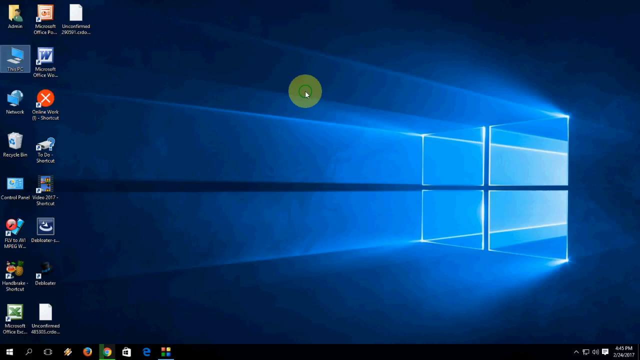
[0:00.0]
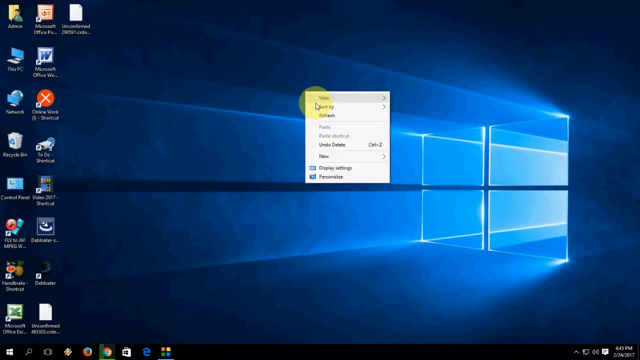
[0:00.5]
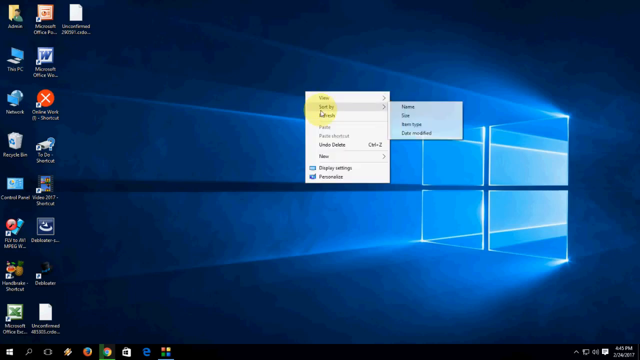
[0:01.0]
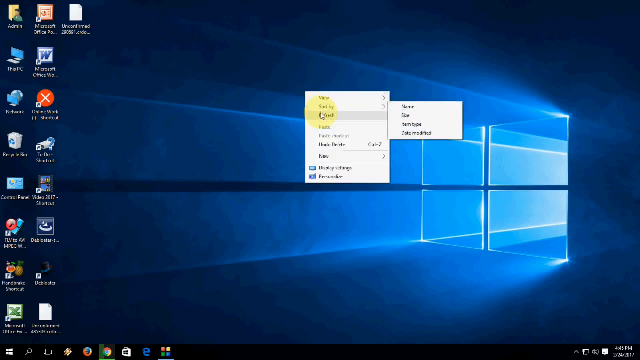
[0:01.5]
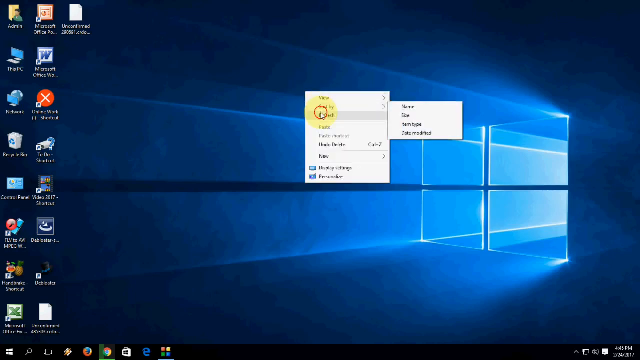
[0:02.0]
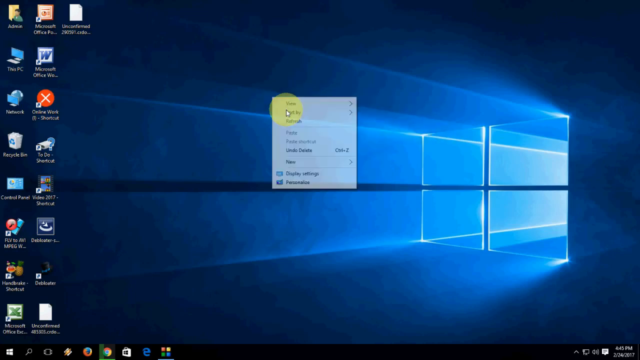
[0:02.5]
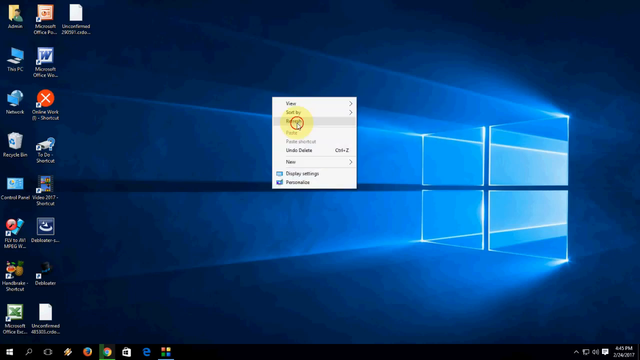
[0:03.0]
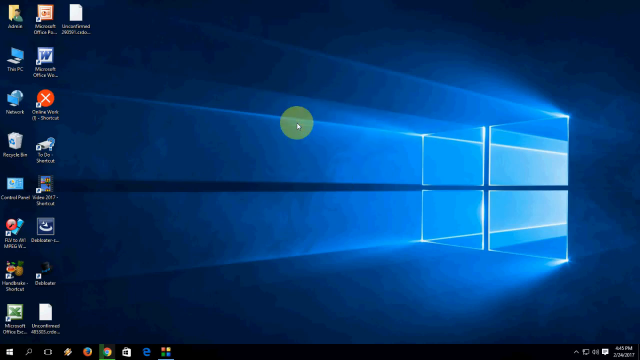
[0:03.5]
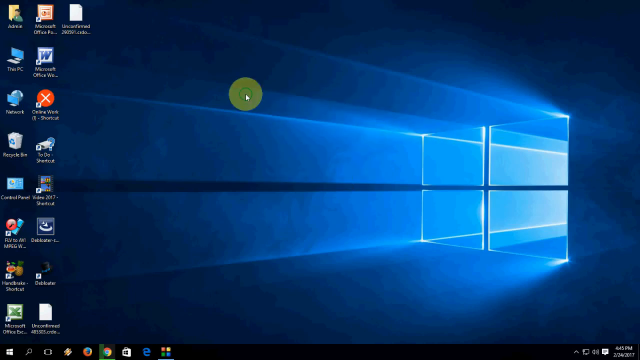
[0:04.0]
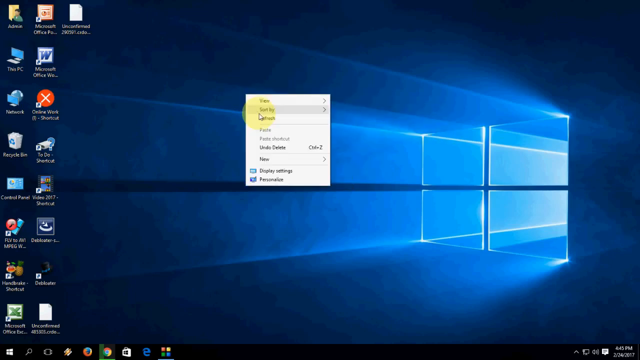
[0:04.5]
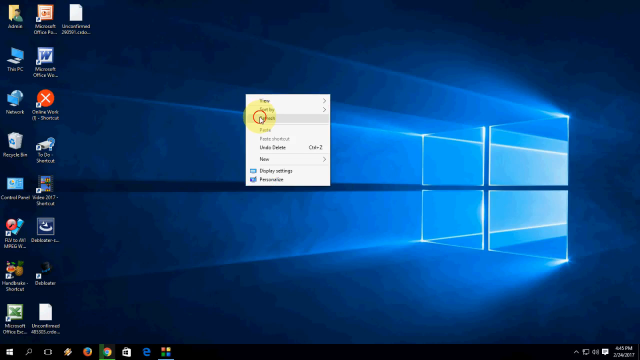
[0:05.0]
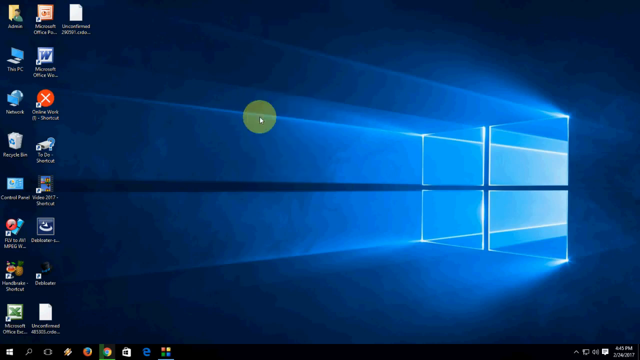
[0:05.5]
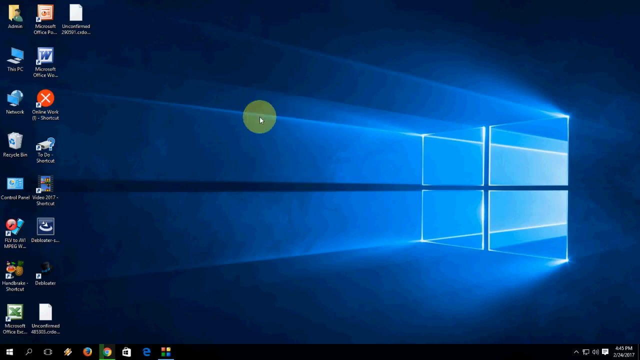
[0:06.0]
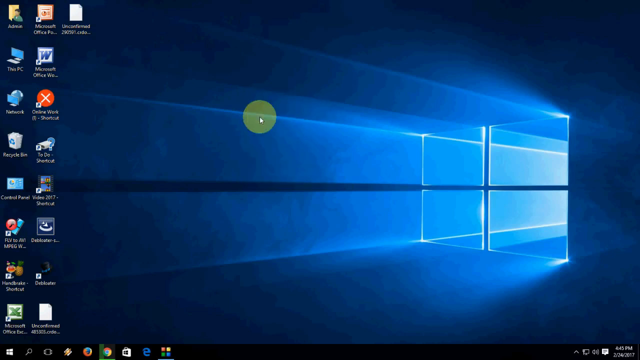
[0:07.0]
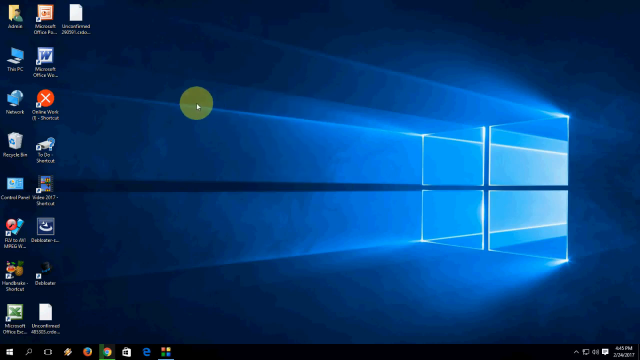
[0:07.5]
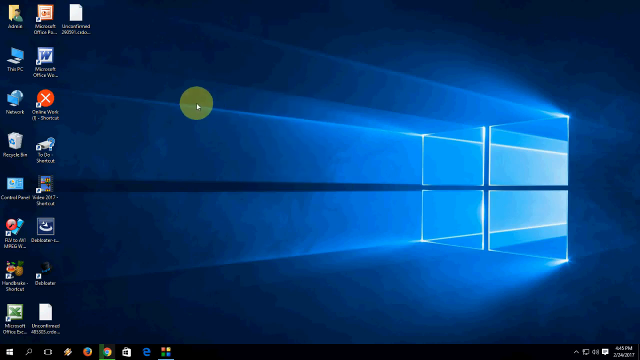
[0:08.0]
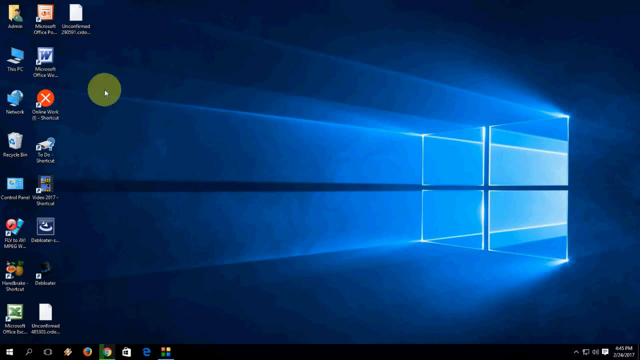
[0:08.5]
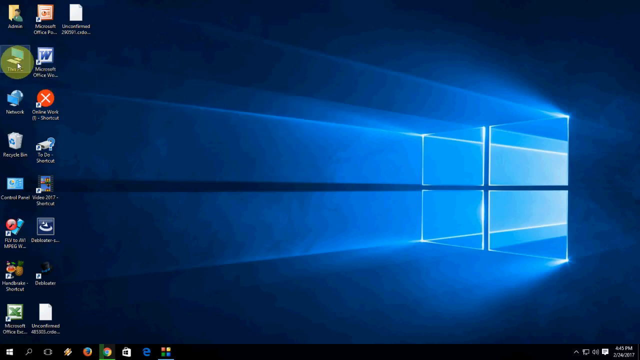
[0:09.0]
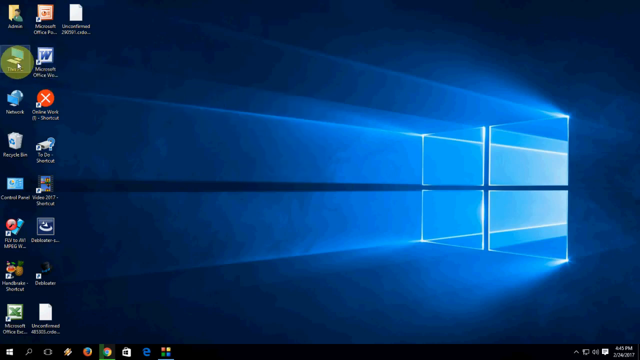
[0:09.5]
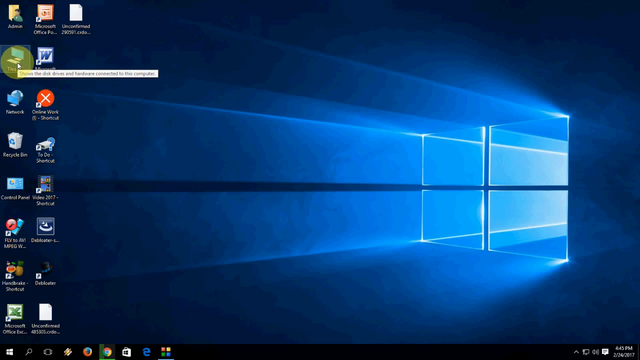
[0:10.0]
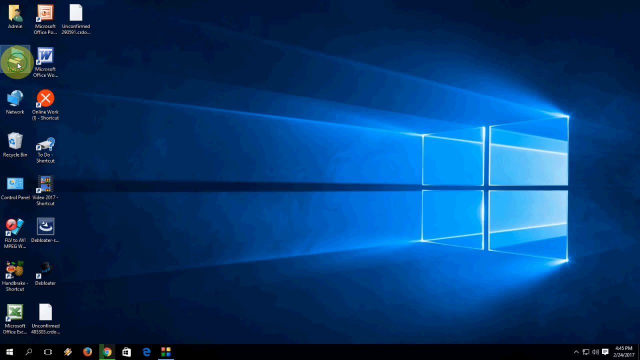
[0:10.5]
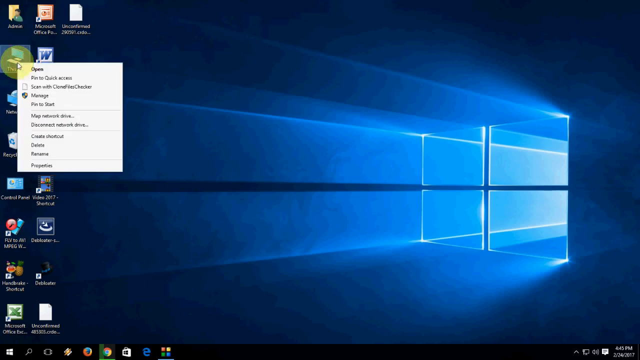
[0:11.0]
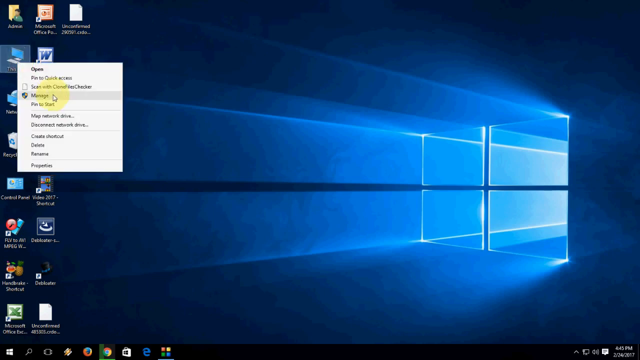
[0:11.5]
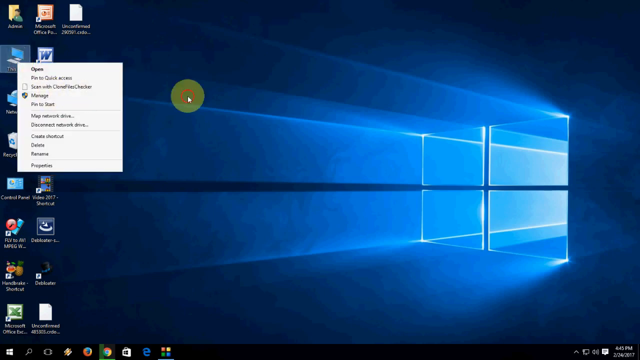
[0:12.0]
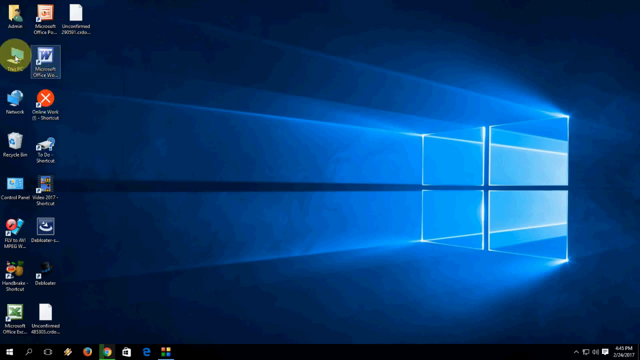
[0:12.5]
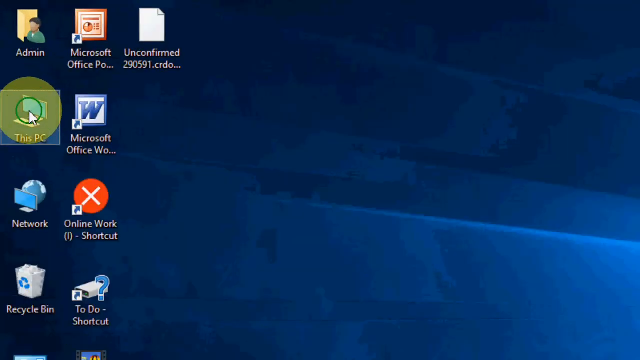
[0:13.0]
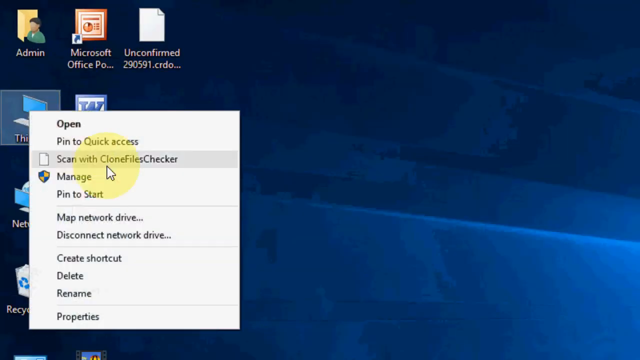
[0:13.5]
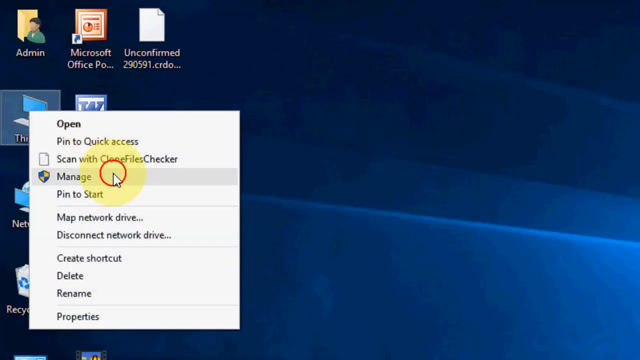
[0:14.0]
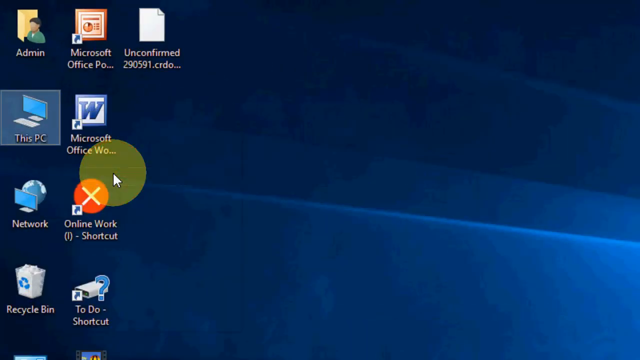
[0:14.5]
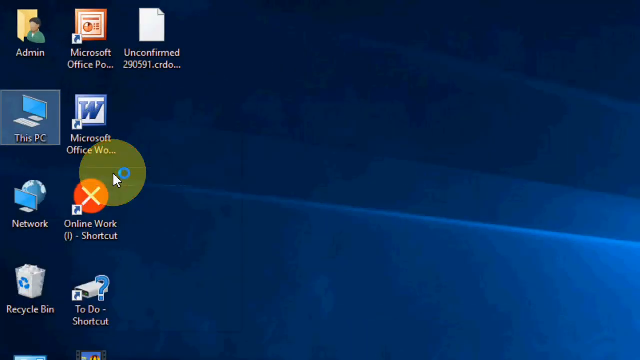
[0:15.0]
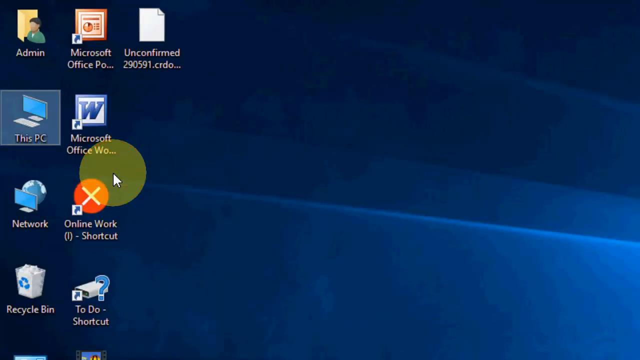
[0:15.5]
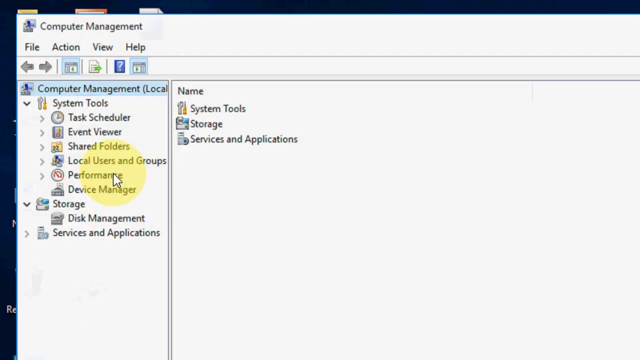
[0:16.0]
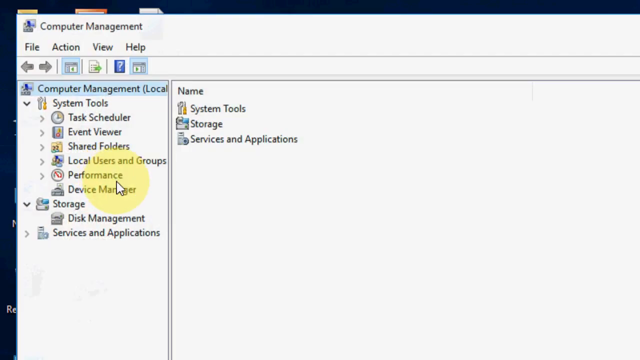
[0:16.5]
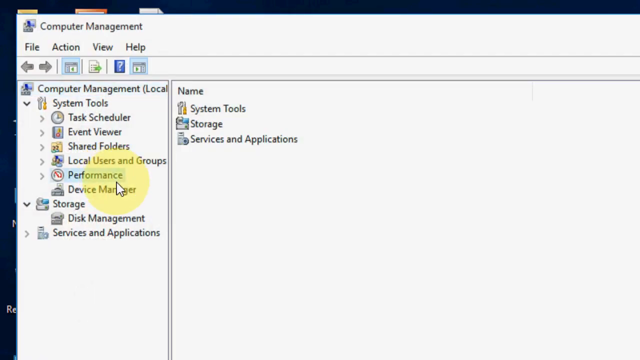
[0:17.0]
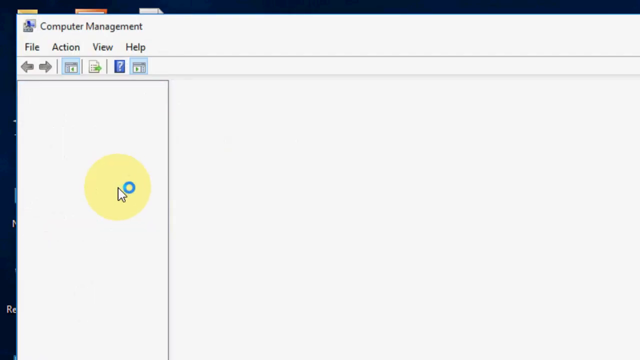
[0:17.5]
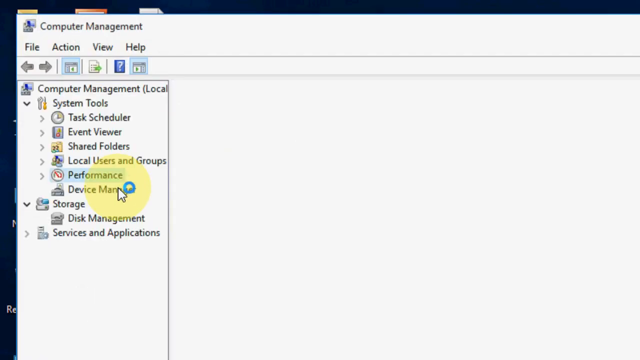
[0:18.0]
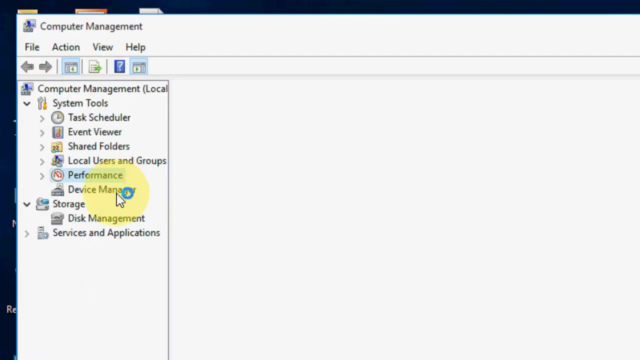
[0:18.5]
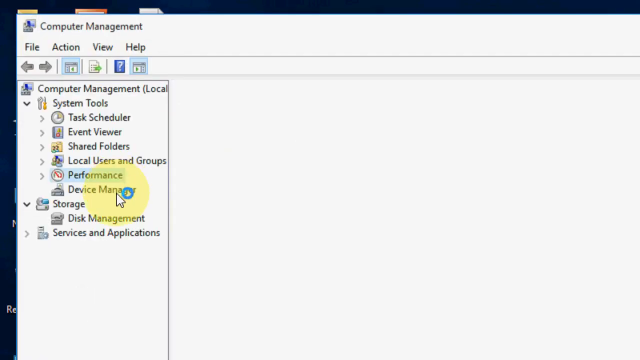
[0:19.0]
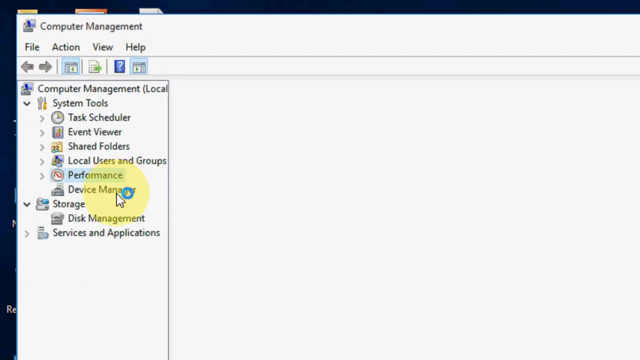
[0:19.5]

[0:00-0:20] A Windows home screen has a Windows logo design as its wallpaper: blues of different shades are emitted as light through four rectangular squares, each reminiscent of a computer display, joined together as one, with beams of light radiating from inside the four panels. On the right side of the screen are a variety of Windows icons, including the trash can and a link to Microsoft Word. The user clicks on the empty area toward the center of the home screen, which pulls up a small drop-down menu of options. The user then moves the cursor to the far right and clicks on an icon that says "This PC", which opens the Computer Management screen with many controls and settings for configuring the system.